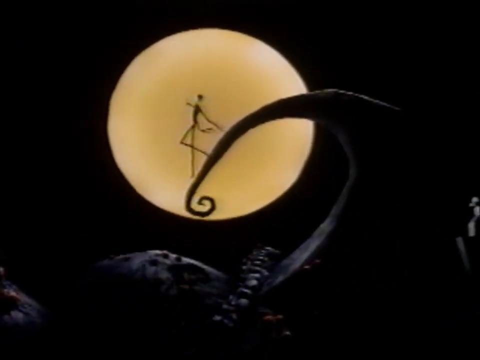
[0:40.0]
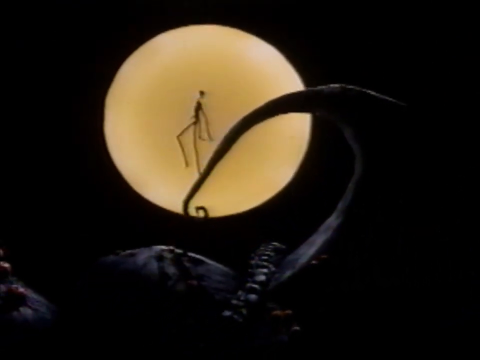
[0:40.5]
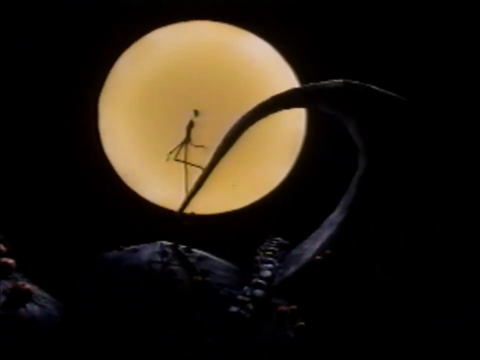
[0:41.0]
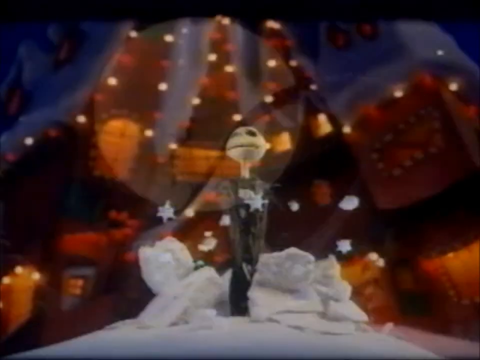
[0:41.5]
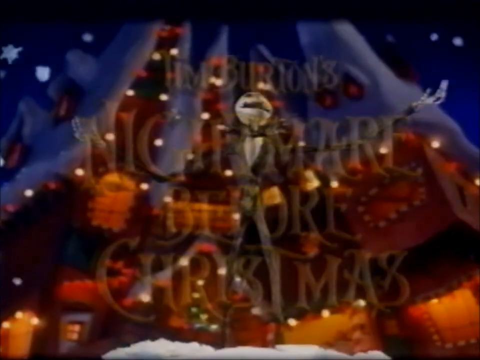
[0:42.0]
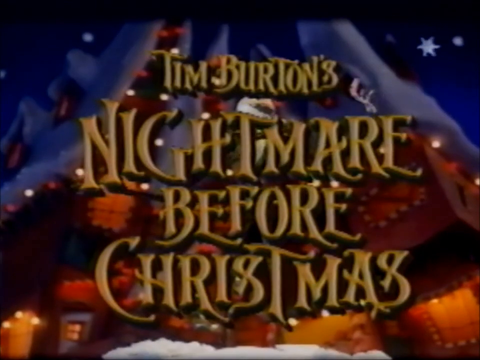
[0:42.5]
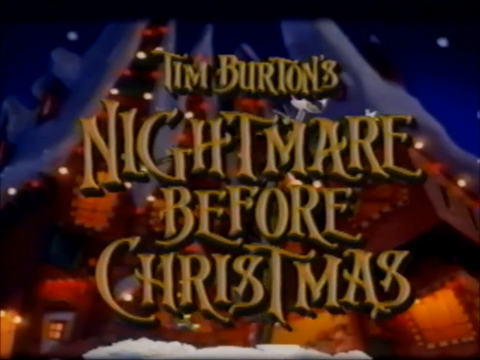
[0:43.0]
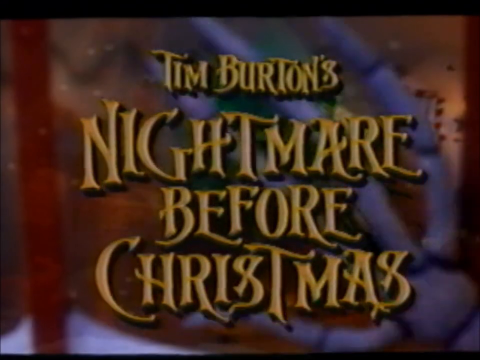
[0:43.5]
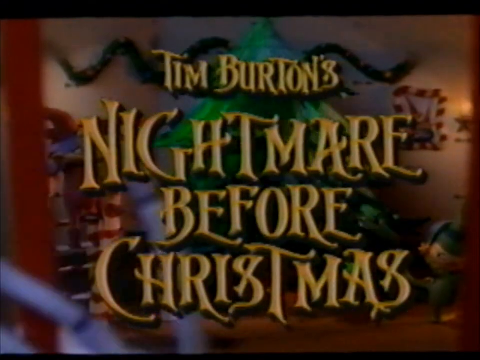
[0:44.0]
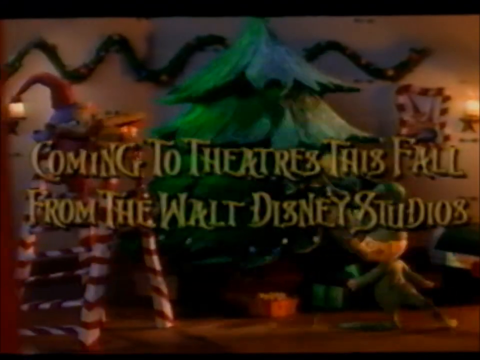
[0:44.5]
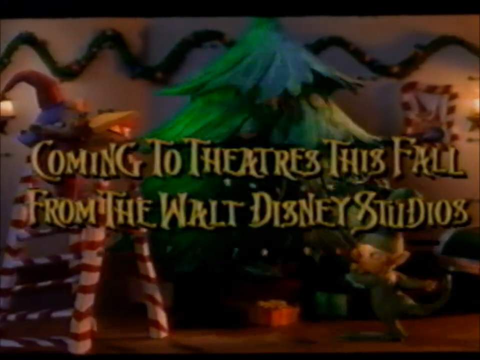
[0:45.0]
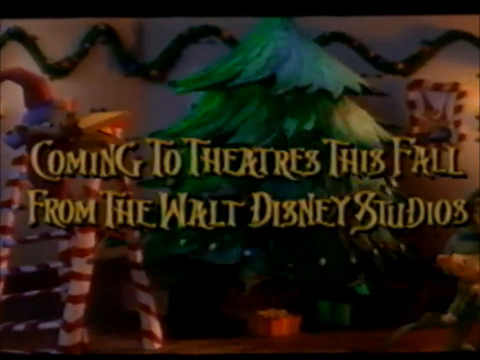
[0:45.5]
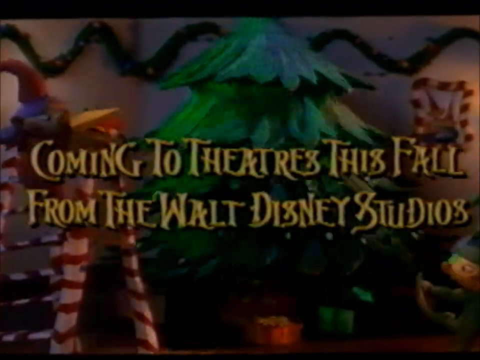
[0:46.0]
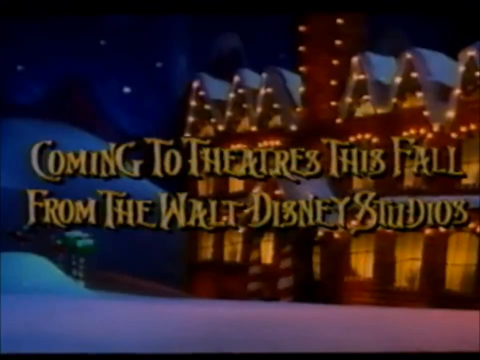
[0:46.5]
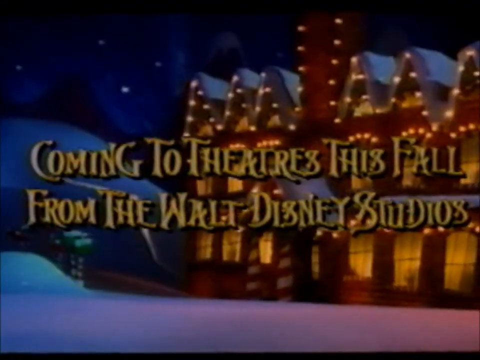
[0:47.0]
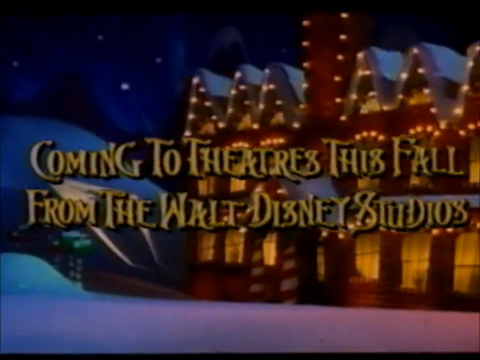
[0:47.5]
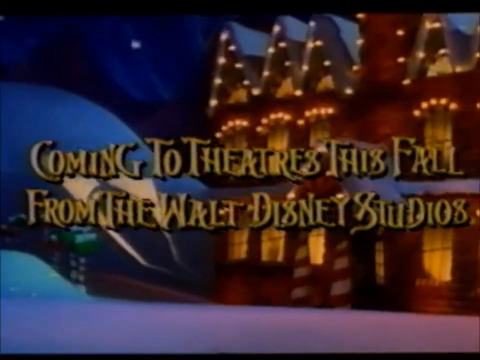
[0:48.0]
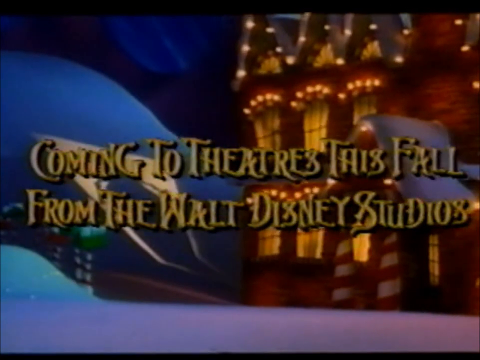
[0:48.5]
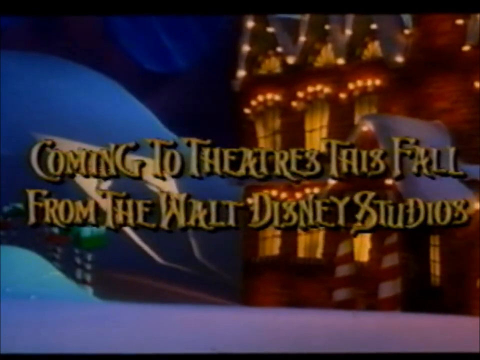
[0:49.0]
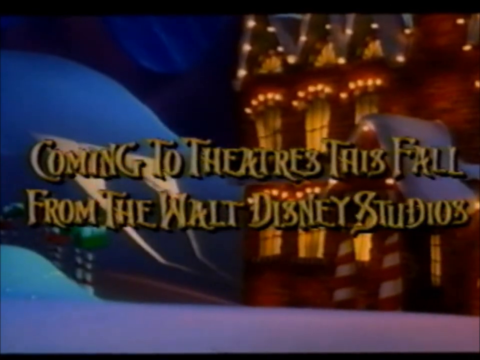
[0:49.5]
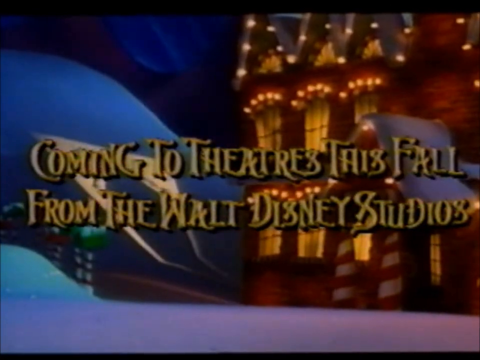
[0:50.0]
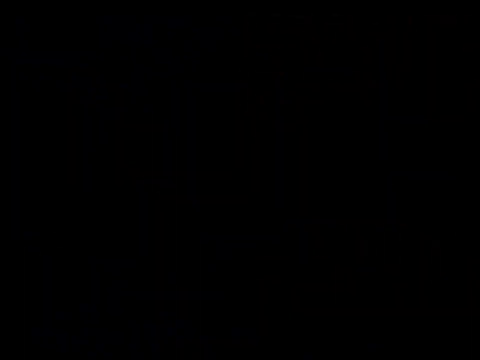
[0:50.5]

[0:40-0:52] In footage from A Nightmare Before Christmas, Jack Skellington walks across the tip of what appears to be a mountain as it slowly uncurls and allows him to touch the ground. The scene switches to another clip from elsewhere in the movie, where Jack springs up with his arms open as the title text "Tim Burton's A Nightmare Before Christmas" fades in. Jack swipes his skeletal hand across the screen to change the text to "Coming to theaters this fall from the Walt Disney Studios." The screen fades to black.